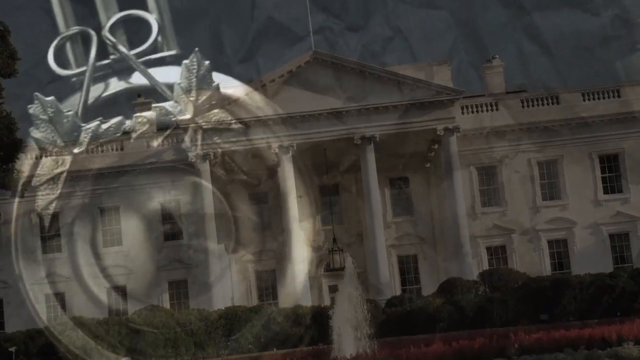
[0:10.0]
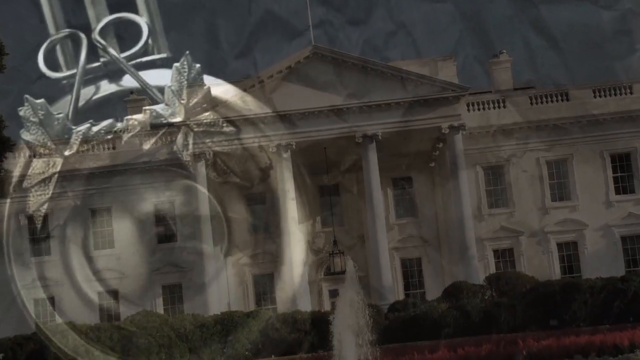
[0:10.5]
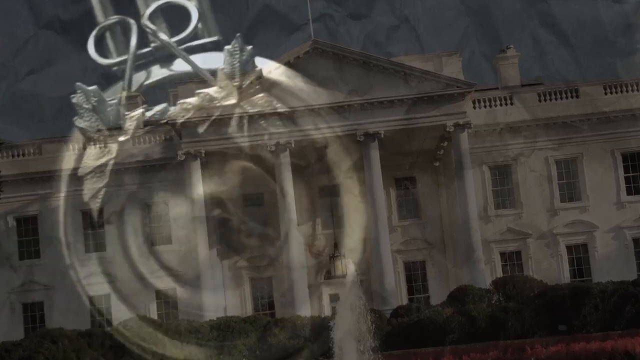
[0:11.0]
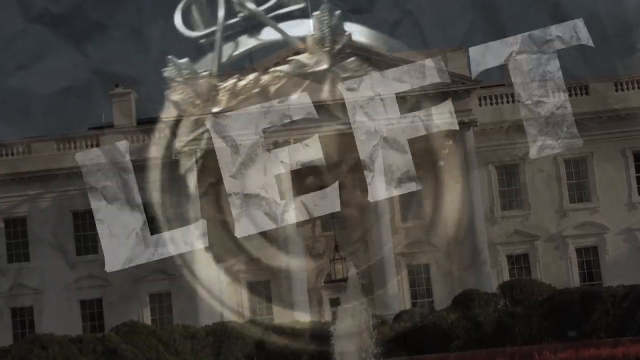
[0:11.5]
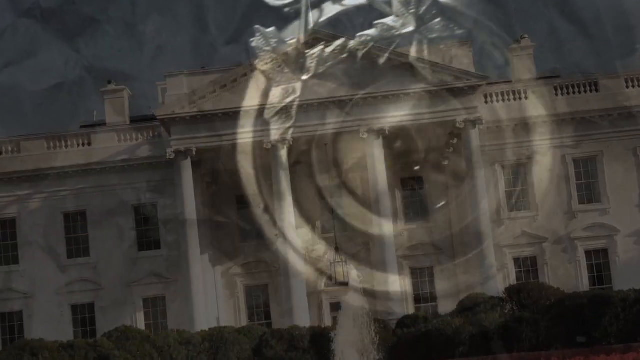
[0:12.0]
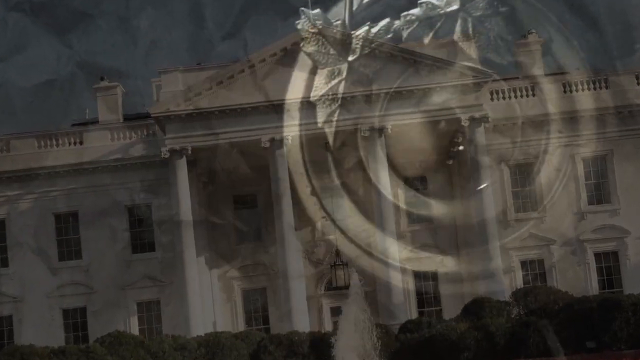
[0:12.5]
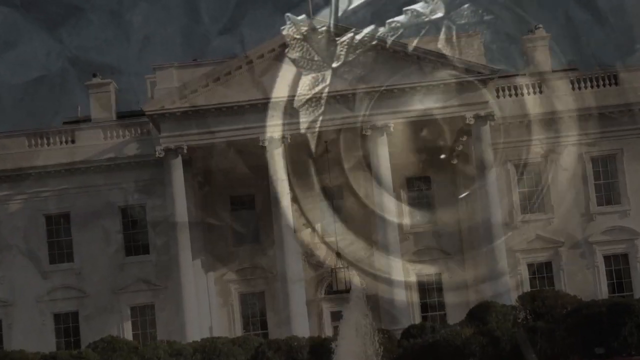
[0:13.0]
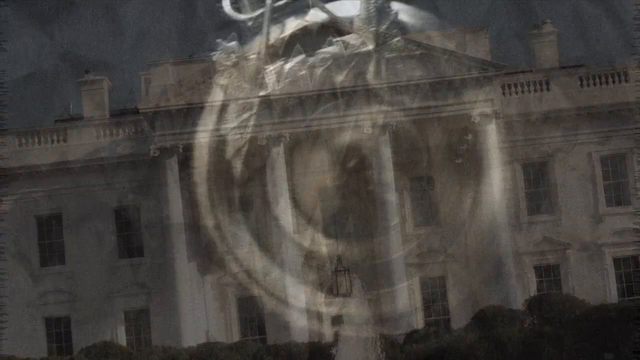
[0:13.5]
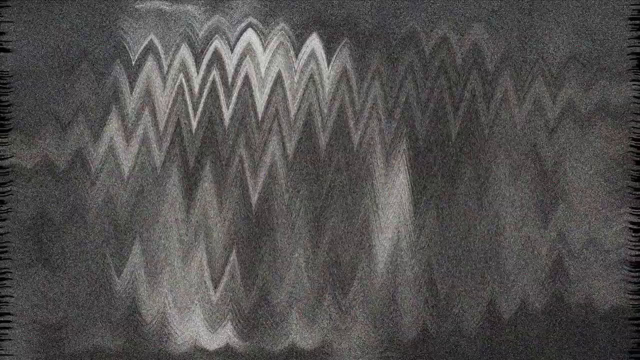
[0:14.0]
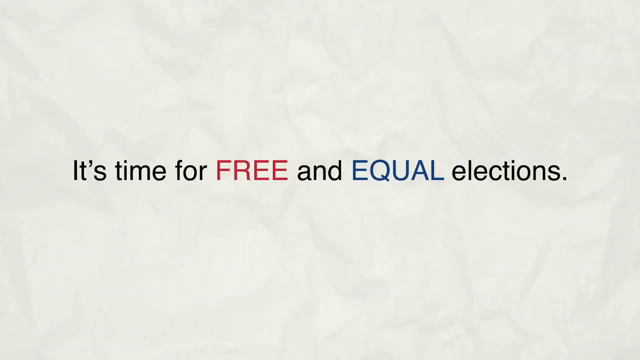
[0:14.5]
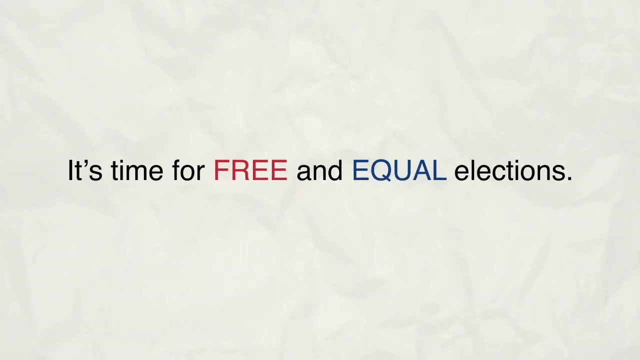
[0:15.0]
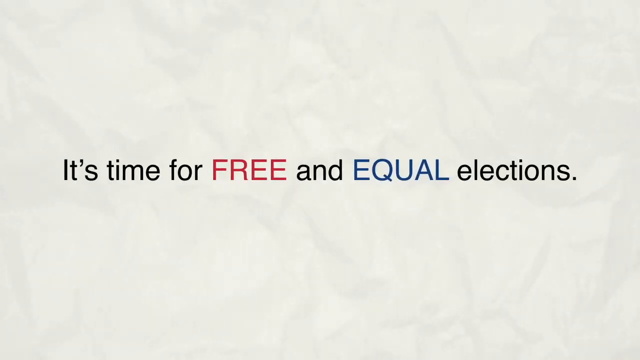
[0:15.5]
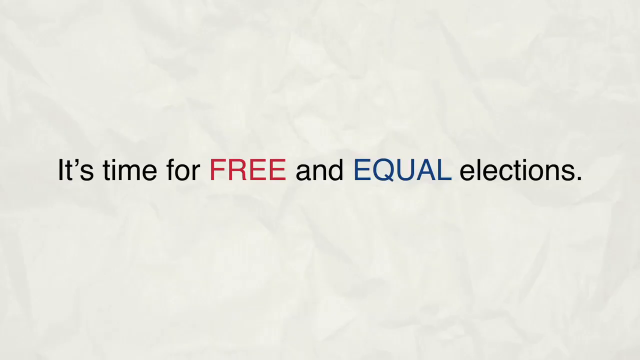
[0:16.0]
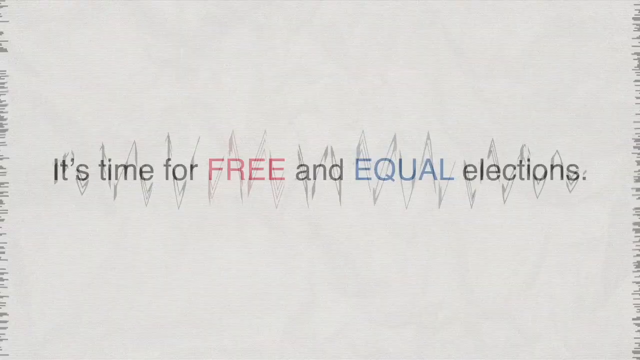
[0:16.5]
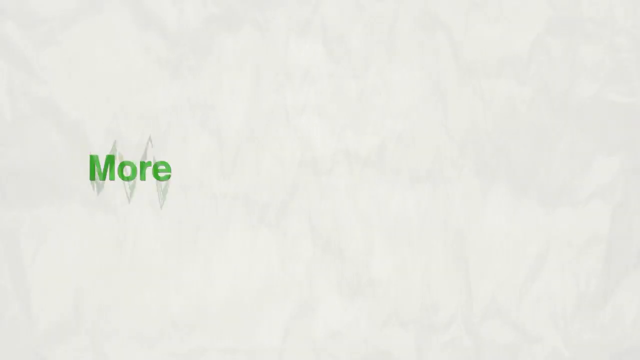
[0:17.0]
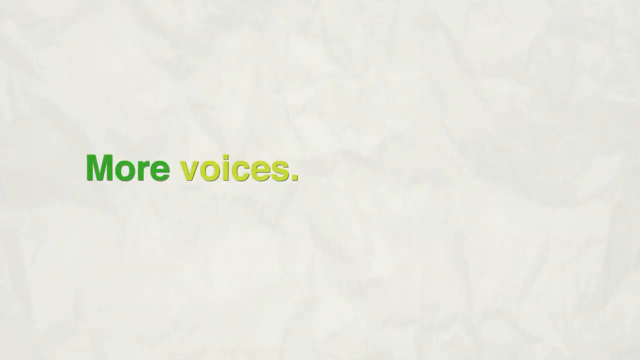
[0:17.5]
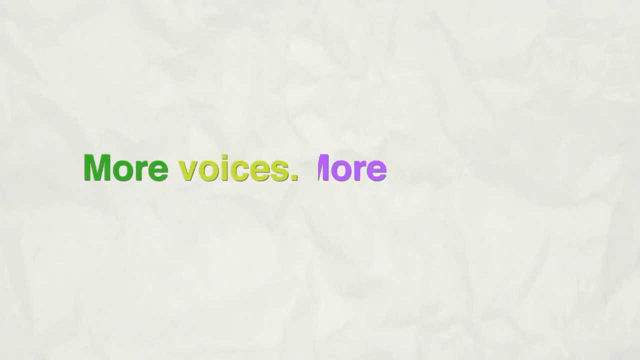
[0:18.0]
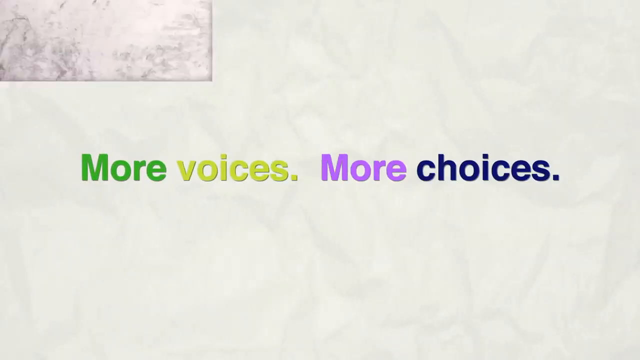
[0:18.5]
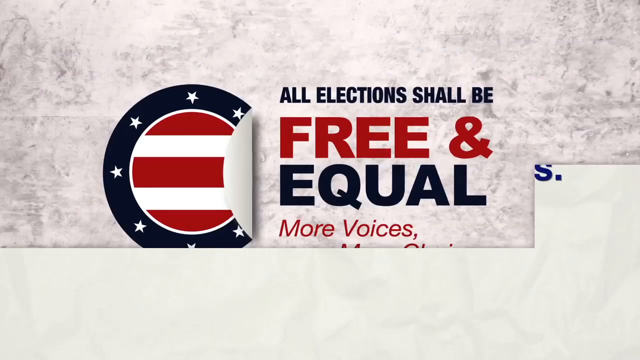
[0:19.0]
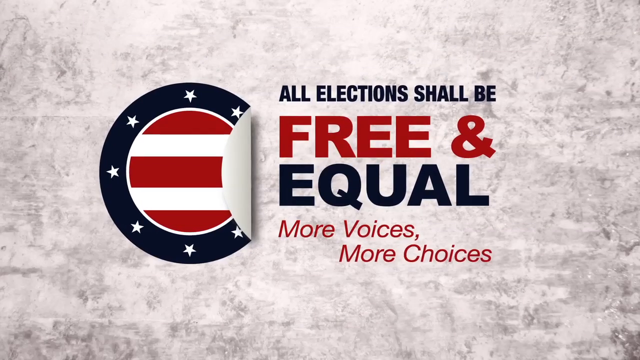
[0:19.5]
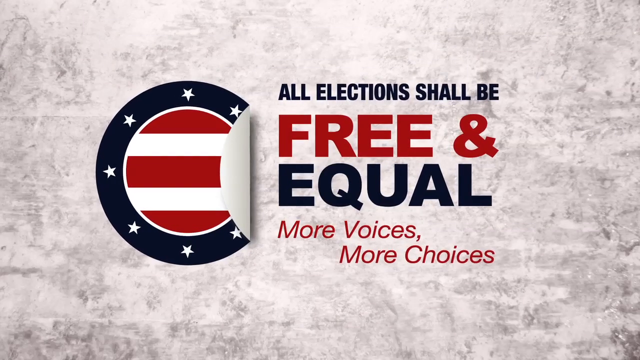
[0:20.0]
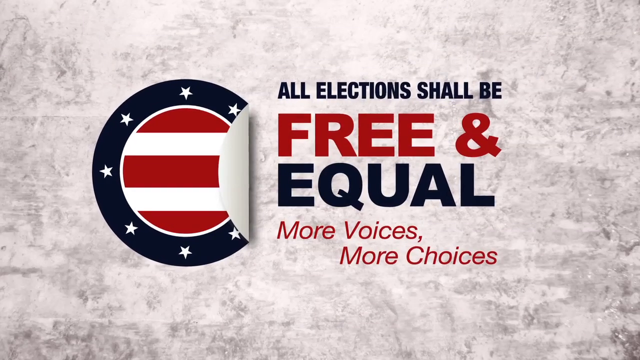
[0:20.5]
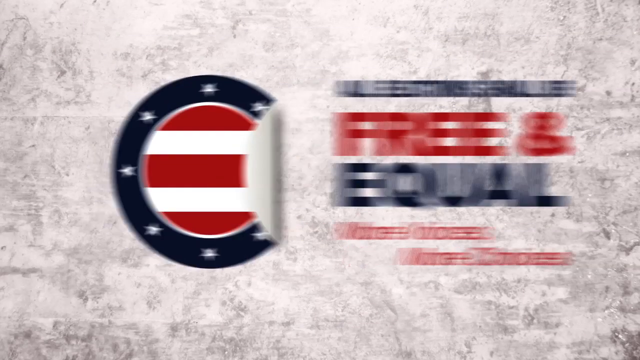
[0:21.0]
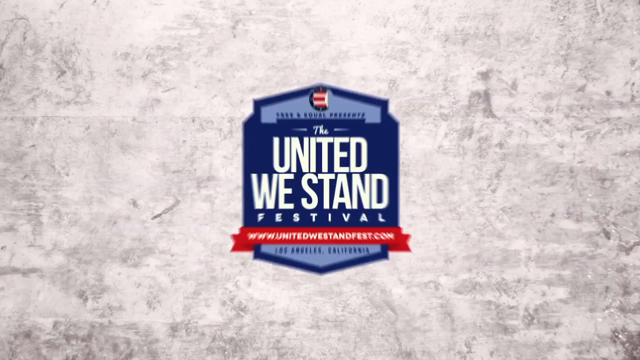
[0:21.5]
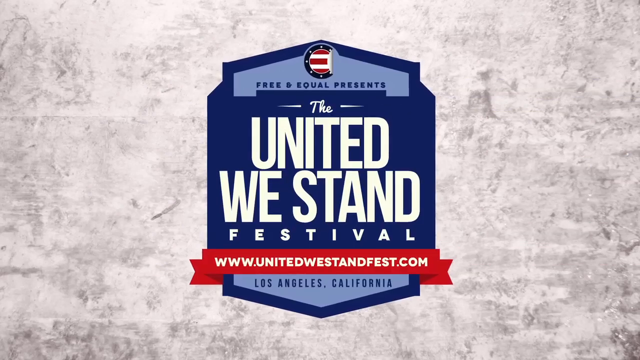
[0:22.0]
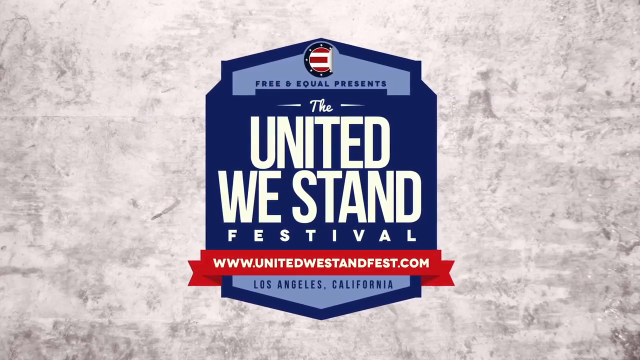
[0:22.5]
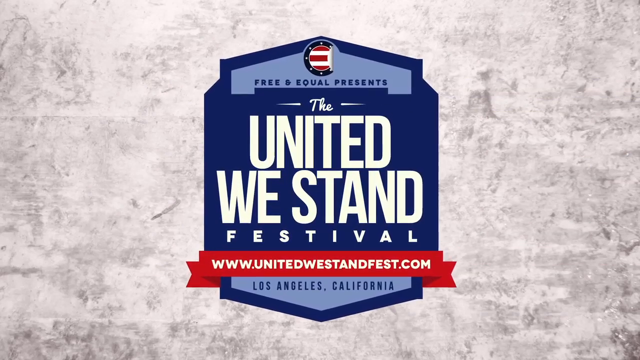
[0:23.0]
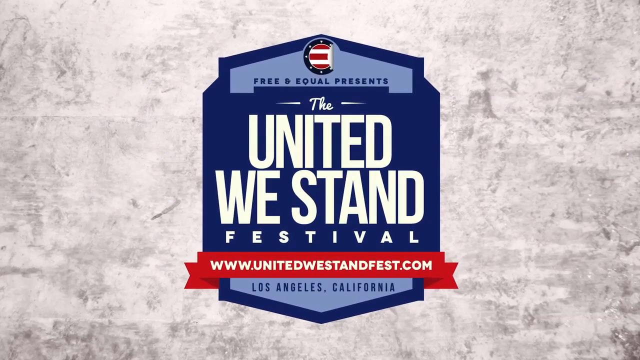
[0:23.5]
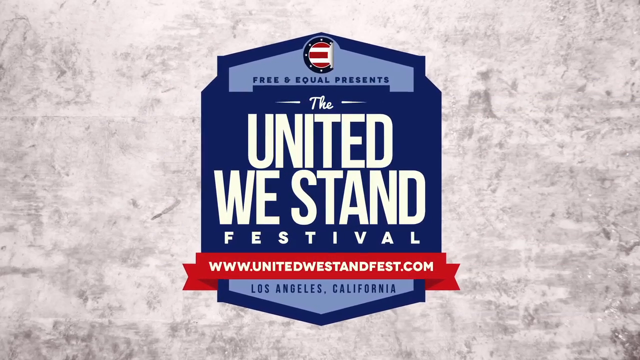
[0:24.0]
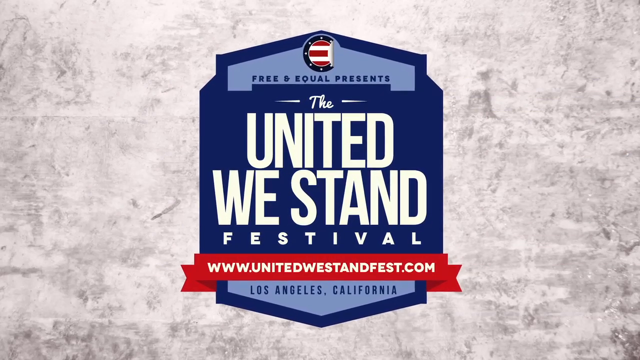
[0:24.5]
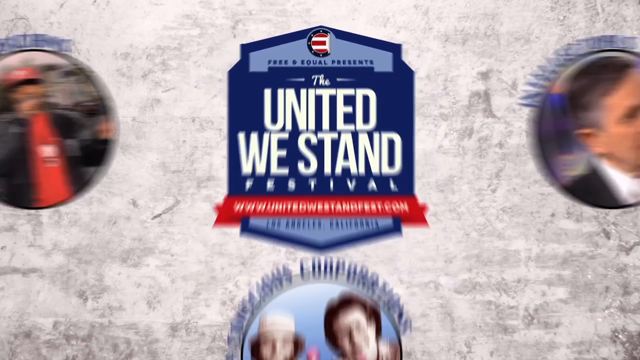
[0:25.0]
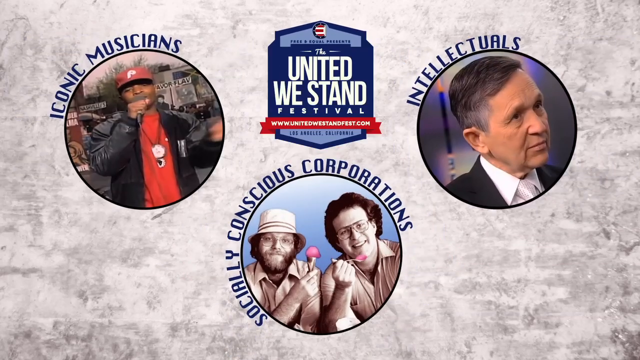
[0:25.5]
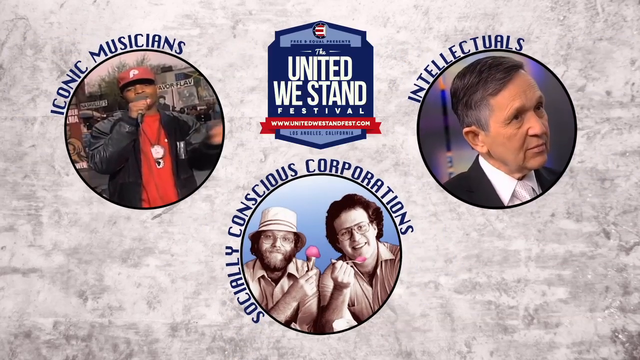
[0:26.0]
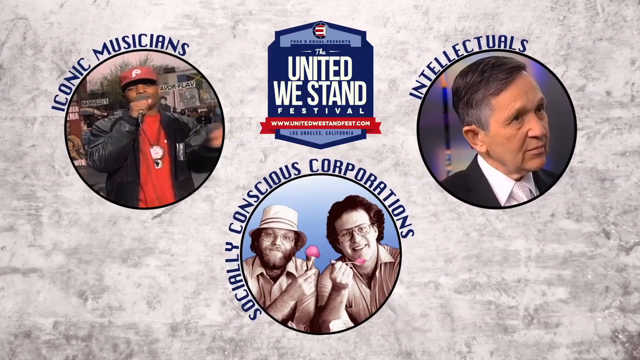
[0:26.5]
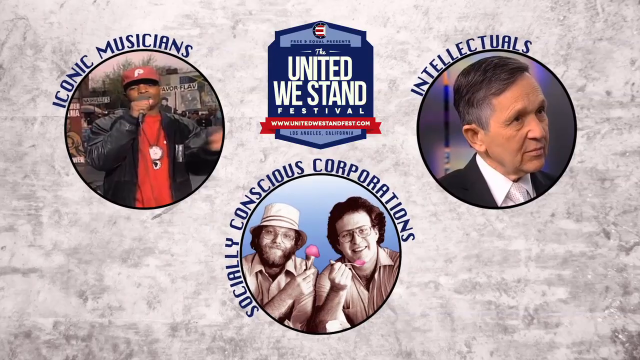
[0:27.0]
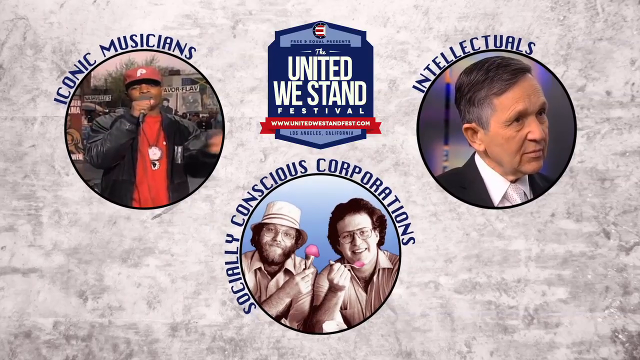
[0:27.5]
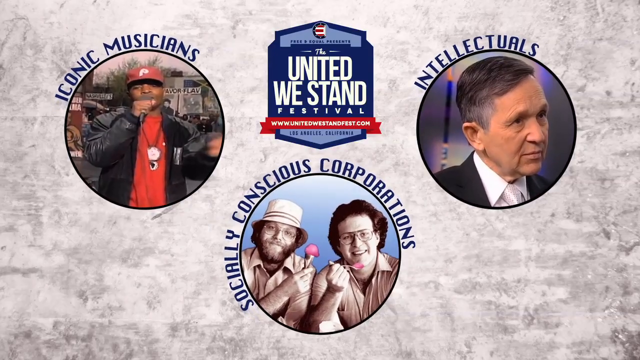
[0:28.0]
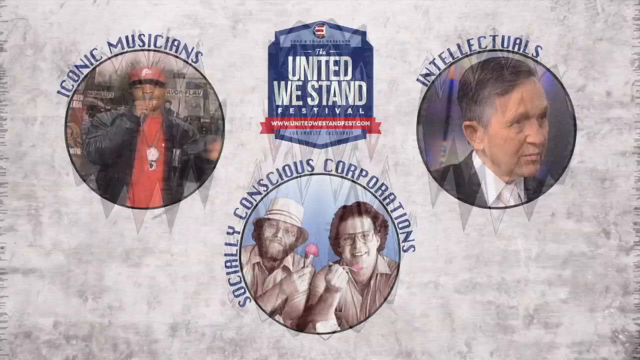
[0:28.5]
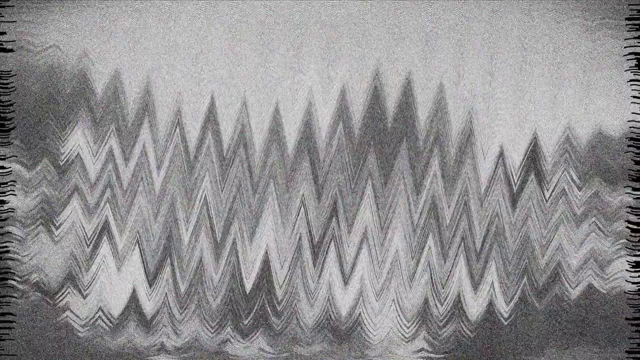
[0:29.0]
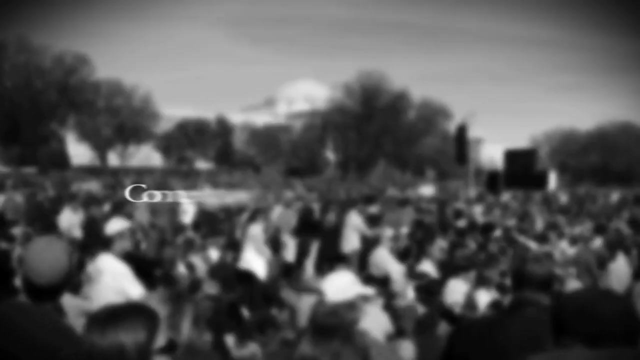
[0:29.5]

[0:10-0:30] Words written on screen read "It's time for free and equal elections," "More voices, more free choices" and "So united we stand." The White House building is shown, and something that looks like a clock, but is not, moves along at the top in front of the big house. Different types of people appear, including black and white people.